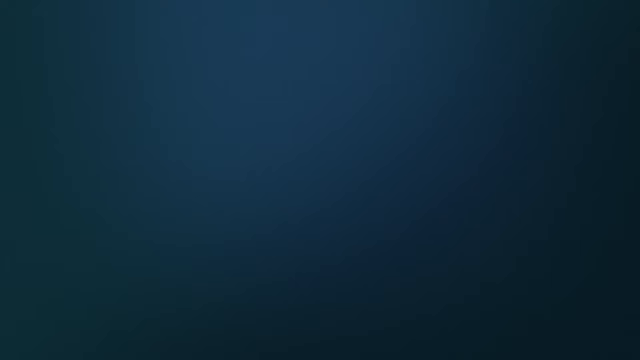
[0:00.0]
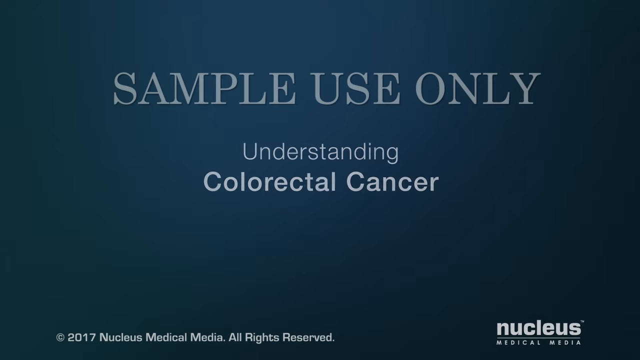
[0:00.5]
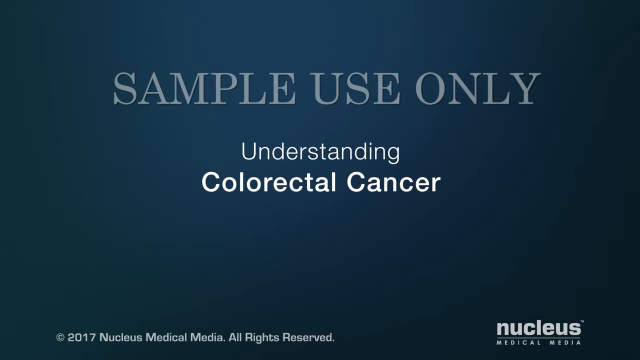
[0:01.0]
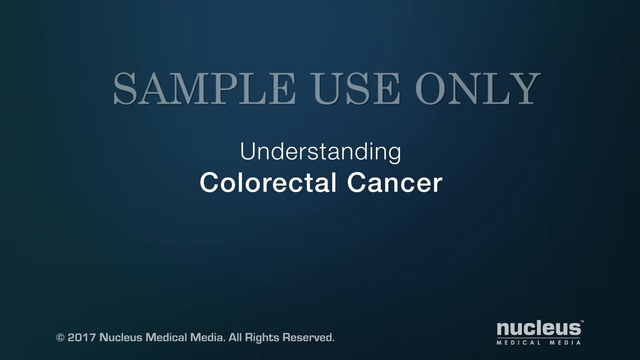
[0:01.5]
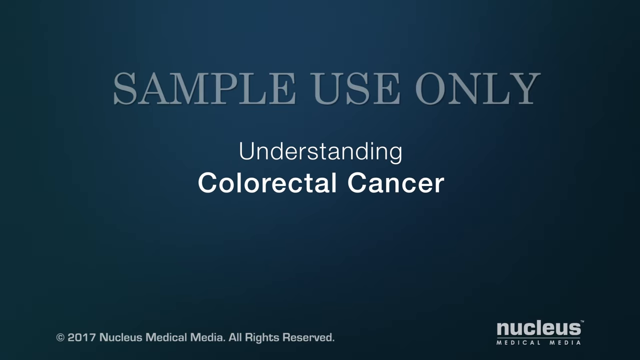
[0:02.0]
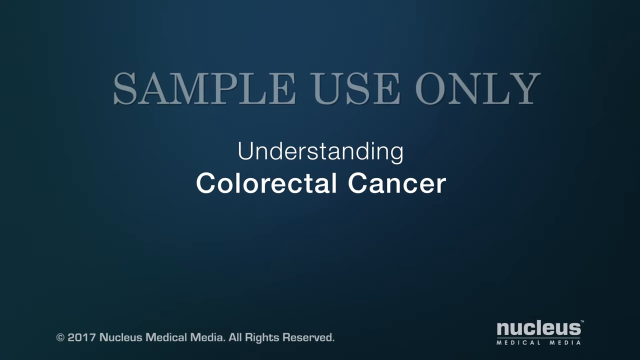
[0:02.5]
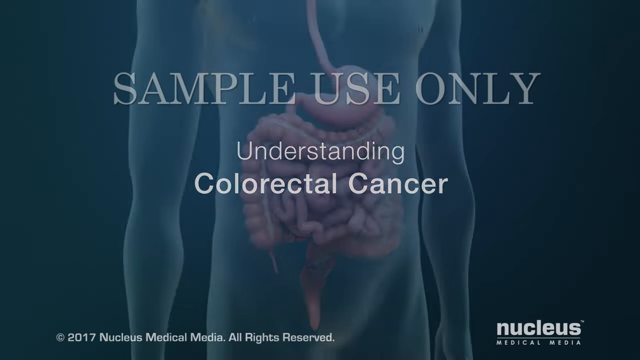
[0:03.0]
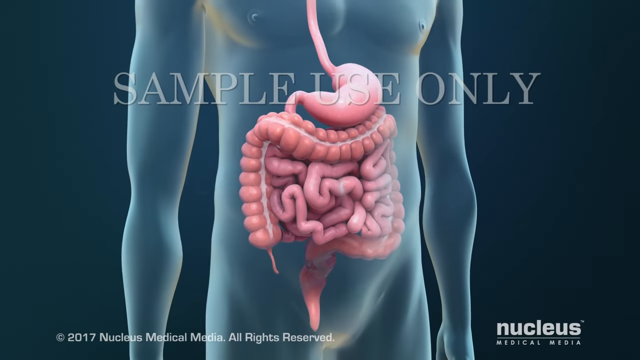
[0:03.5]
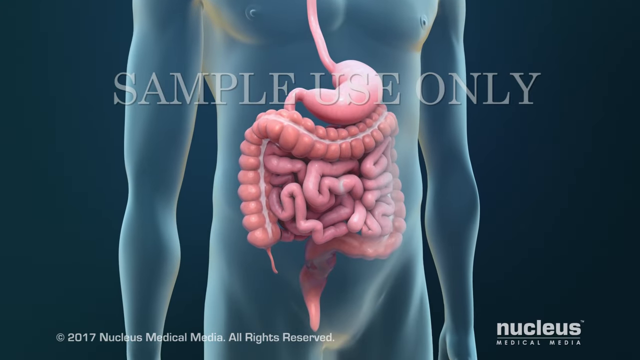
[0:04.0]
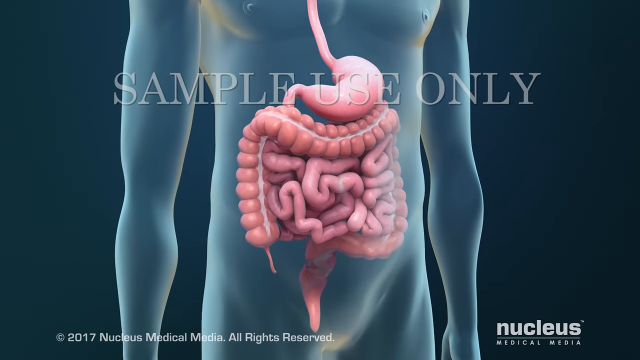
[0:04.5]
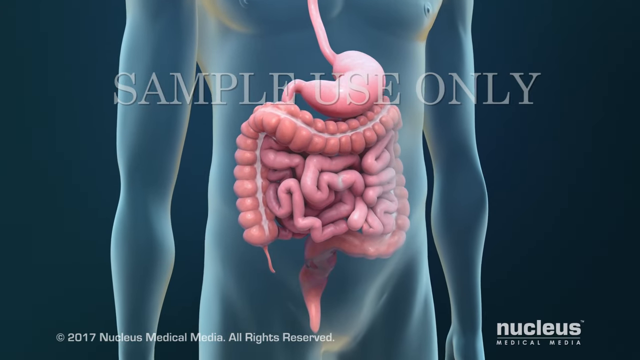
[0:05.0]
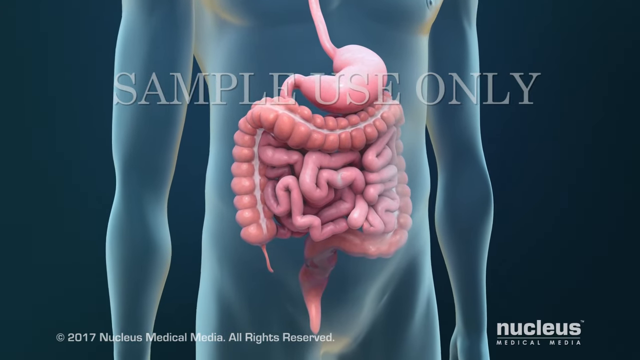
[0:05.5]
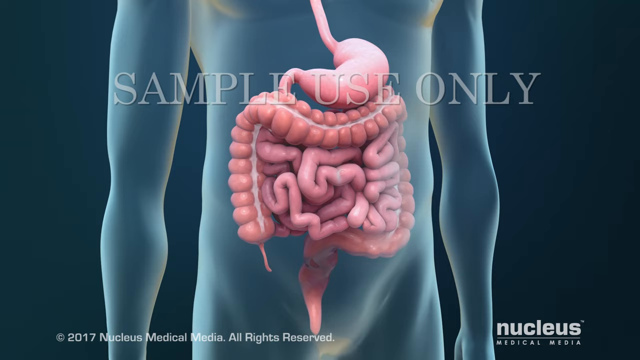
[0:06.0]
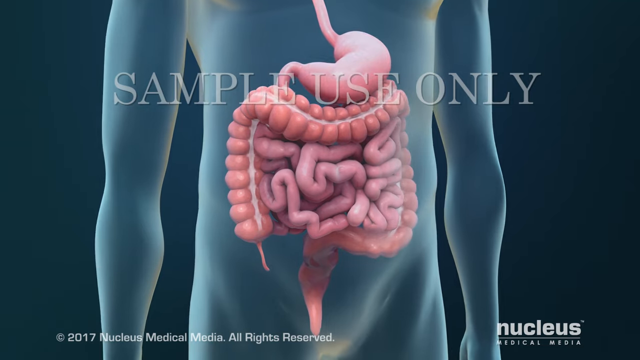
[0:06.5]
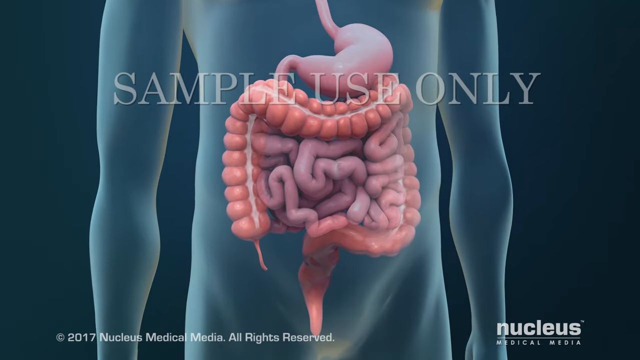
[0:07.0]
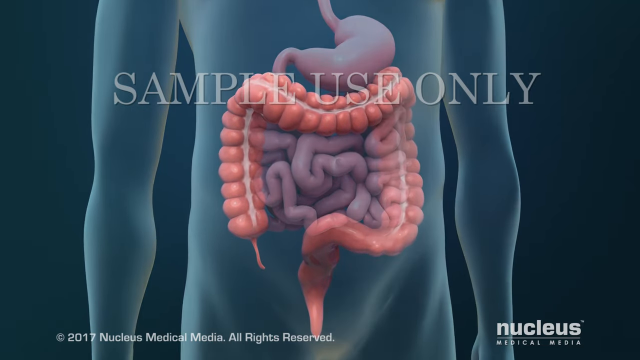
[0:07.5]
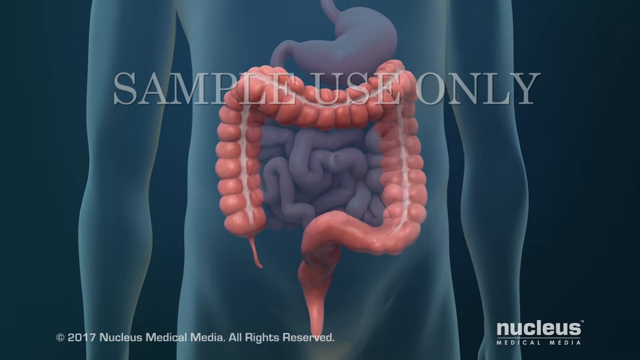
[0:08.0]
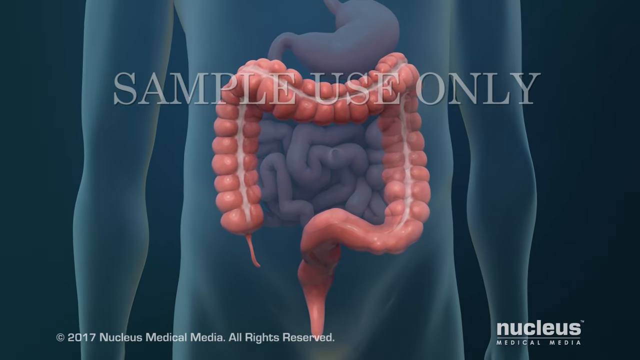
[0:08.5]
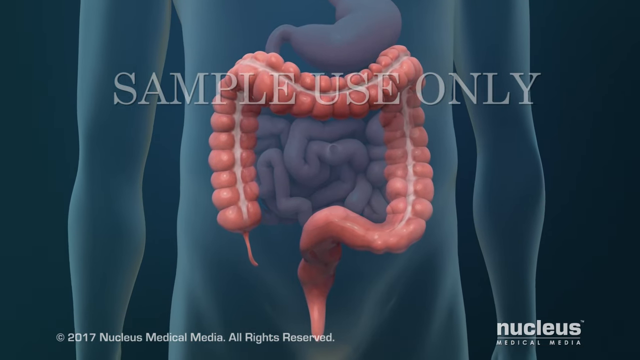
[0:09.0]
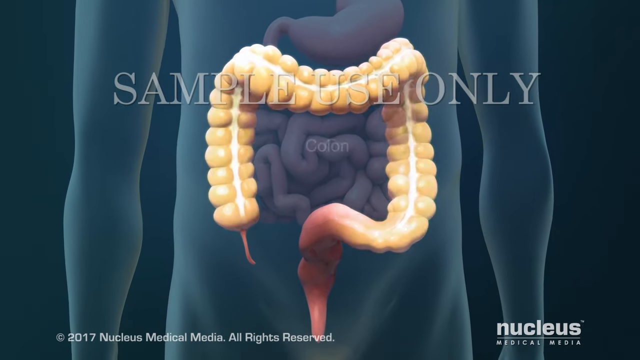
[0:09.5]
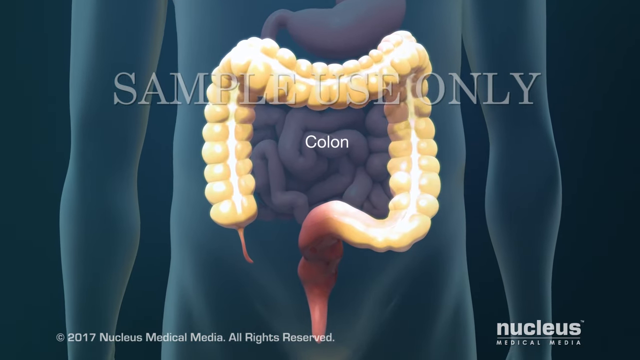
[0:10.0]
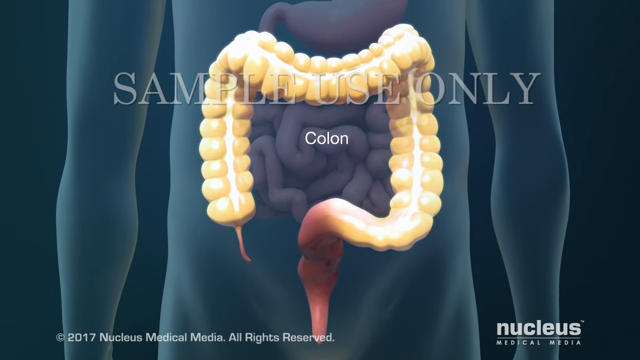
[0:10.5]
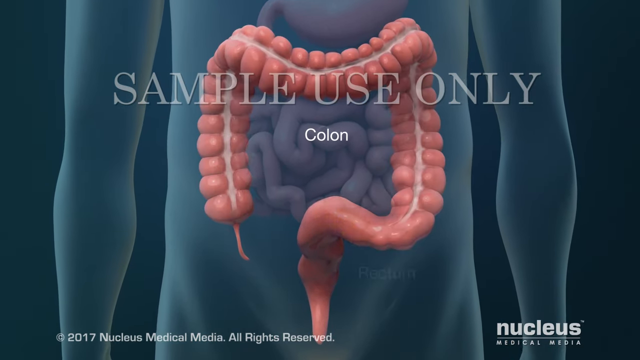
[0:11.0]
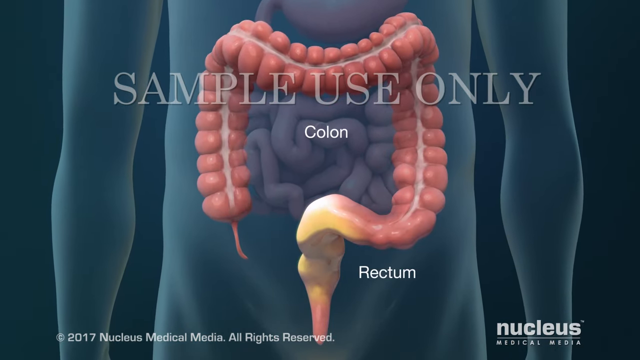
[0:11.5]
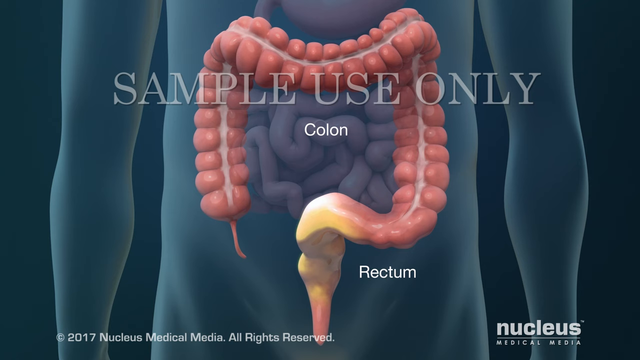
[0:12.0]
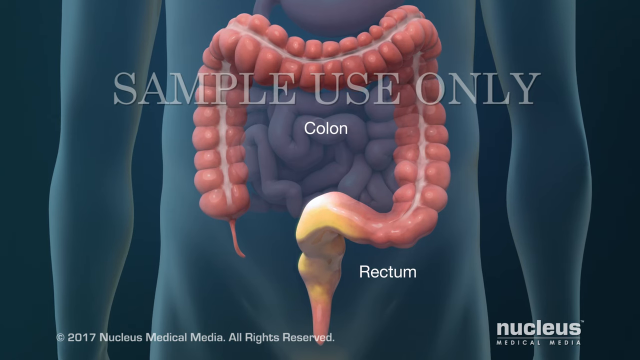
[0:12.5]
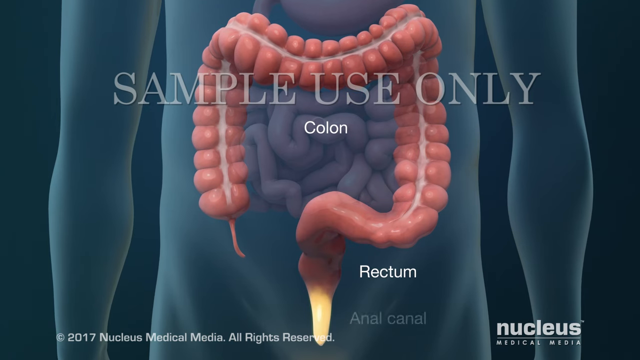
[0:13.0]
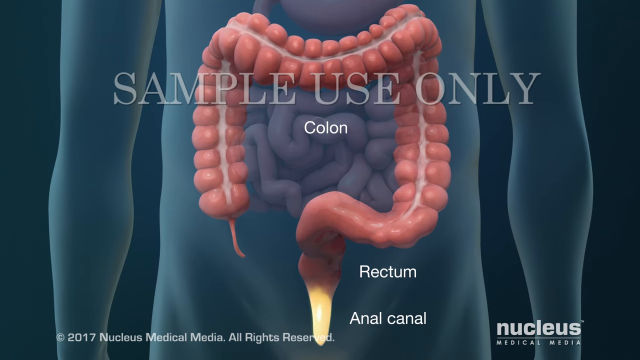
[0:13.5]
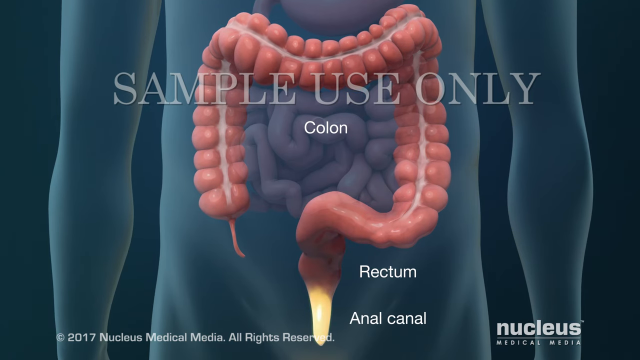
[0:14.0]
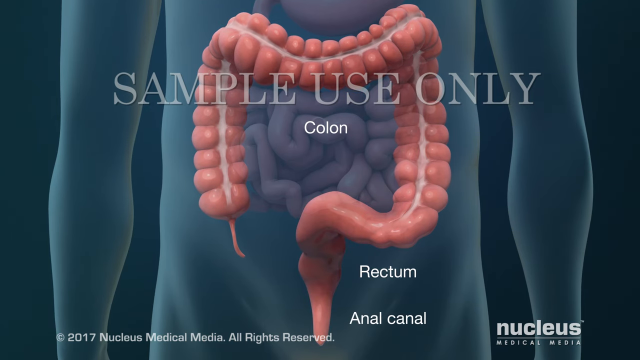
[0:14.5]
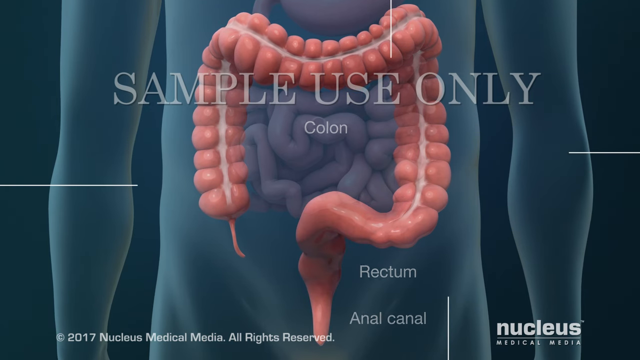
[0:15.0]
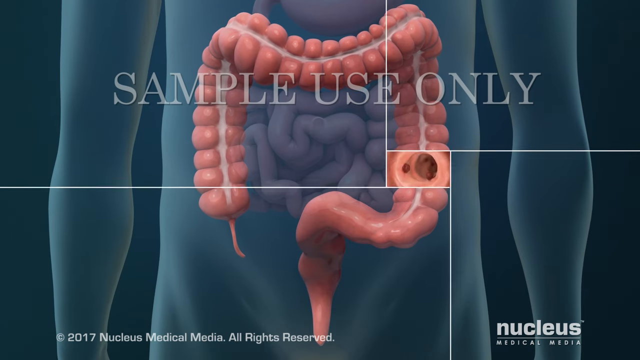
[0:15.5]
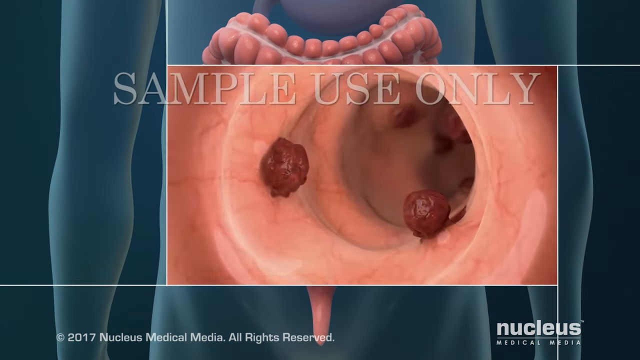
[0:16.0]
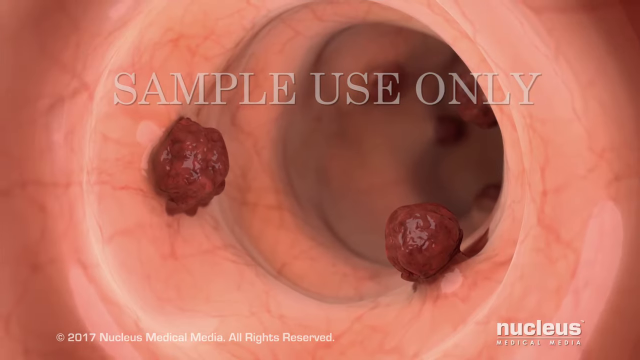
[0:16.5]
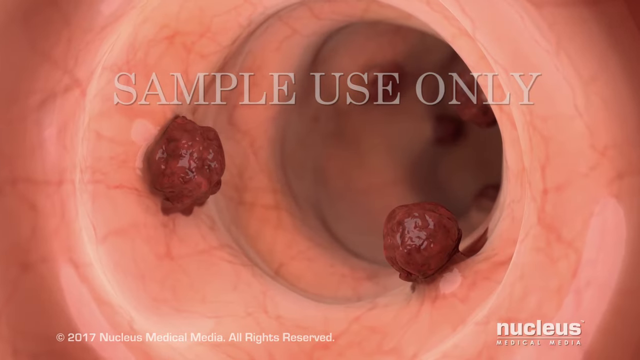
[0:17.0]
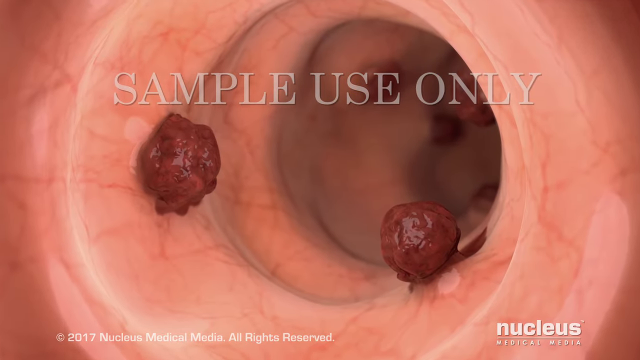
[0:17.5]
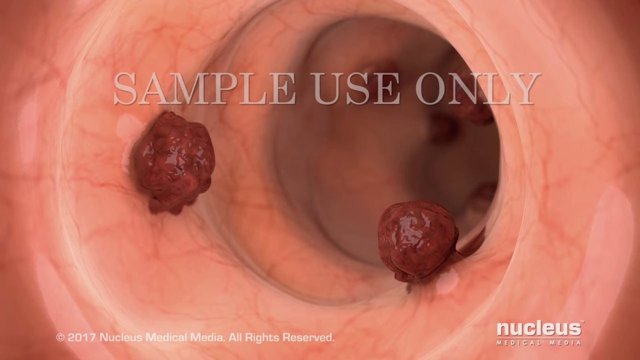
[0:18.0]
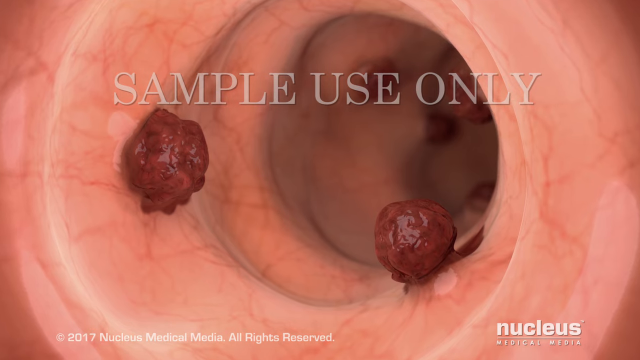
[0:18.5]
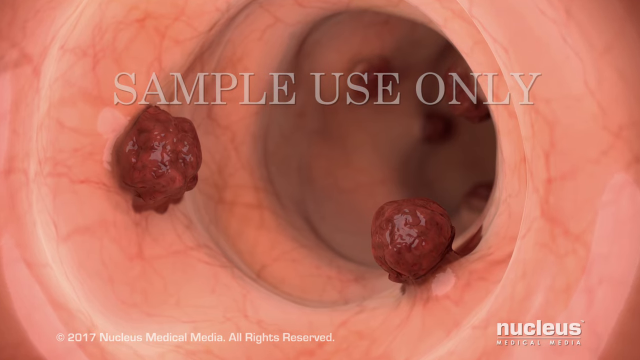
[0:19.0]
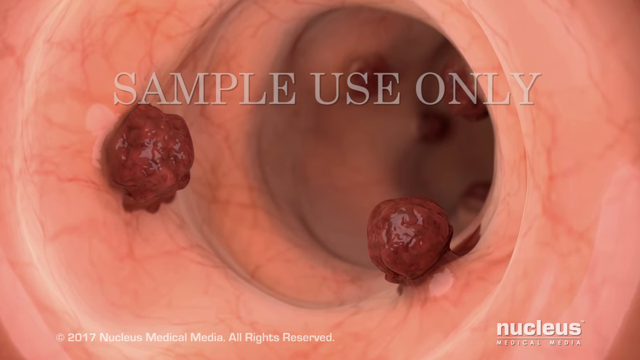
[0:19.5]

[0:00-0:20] A navy blue screen, darker toward the edges and lighter in the middle, opens the video about colorectal cancer. At the top center, slightly see-through gray capital letters read "sample use only," and beneath them white text reads "understanding colorectal cancer," with "colorectal cancer" bolder than "understanding." The title card fades into a diagram of a human body, which looks to be a male body, showing the insides of the stomach and intestine area. The view sort of pans around and zooms in, highlighting the colon, then the rectum, and then the anal canal in bright yellow. It then zooms in to show what is probably the inside of the anal canal with this type of cancer: a fleshy tunnel with six darker-colored polyps. The scan looks veiny and shiny. "Sample use only" still appears across the top of the screen. The view sort of zooms in more, then the screen goes blank and fades out to navy.